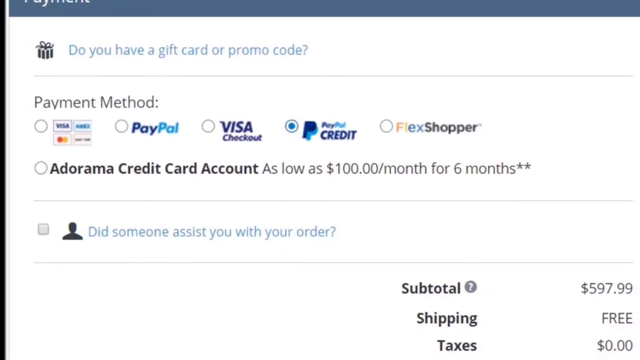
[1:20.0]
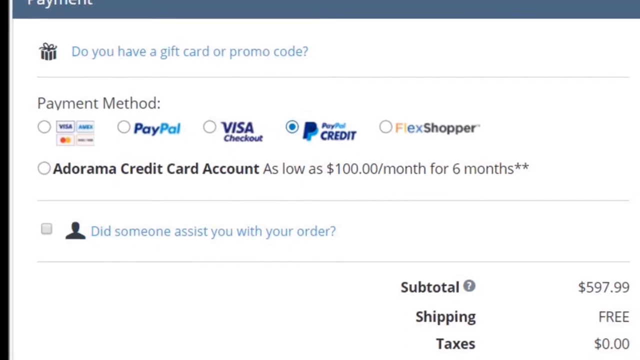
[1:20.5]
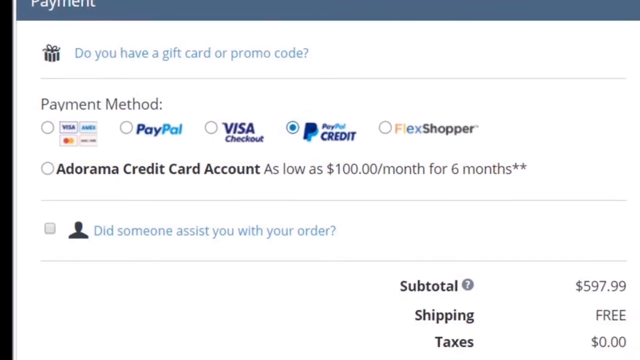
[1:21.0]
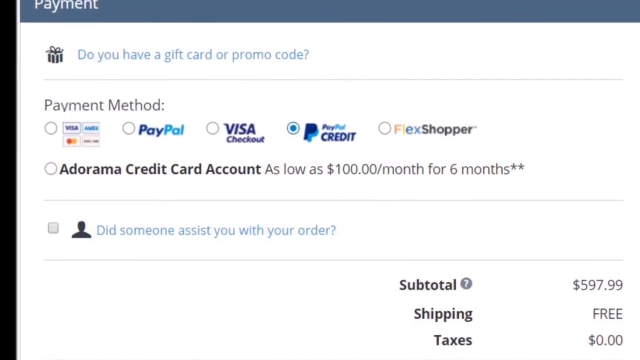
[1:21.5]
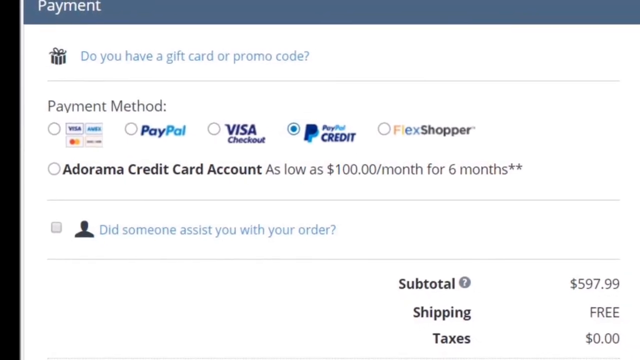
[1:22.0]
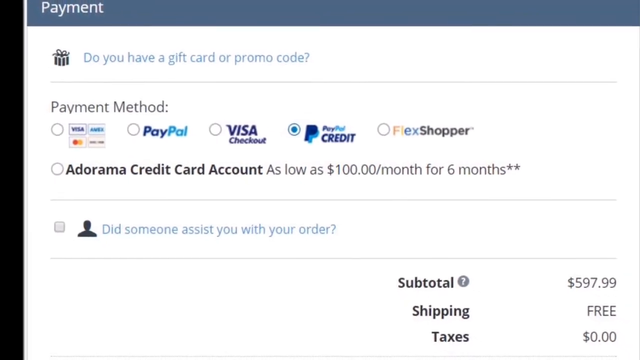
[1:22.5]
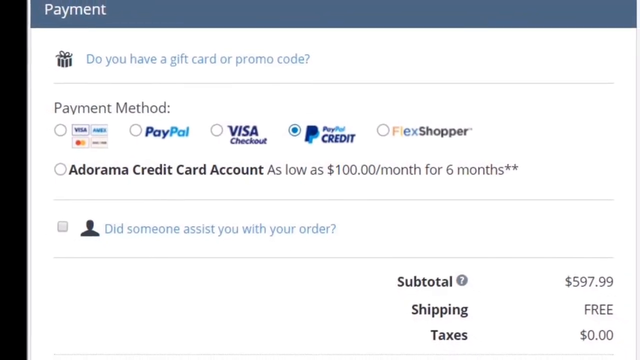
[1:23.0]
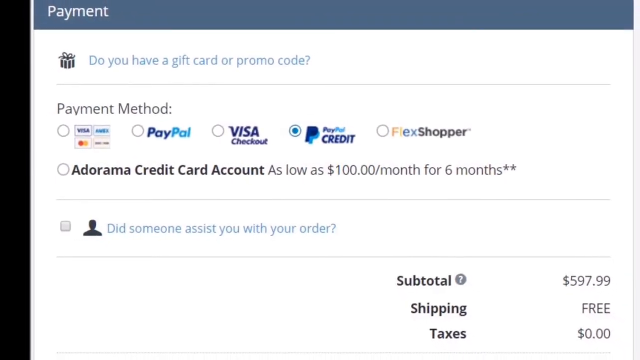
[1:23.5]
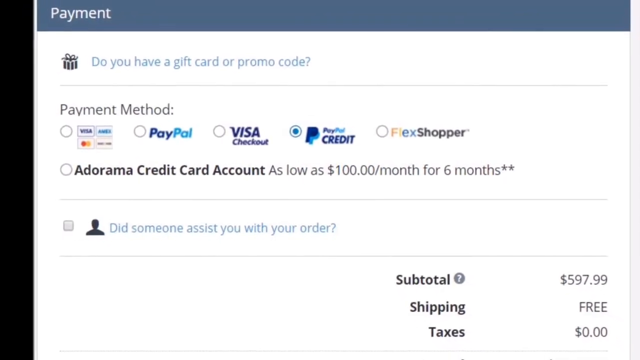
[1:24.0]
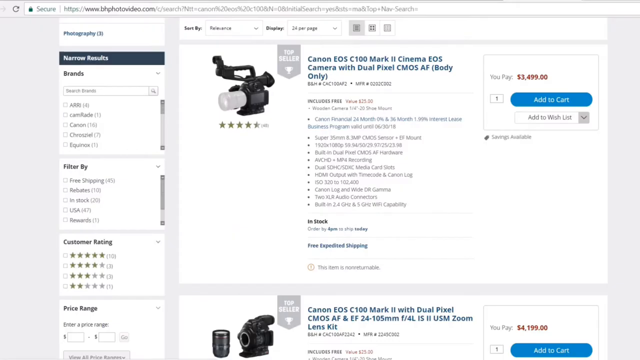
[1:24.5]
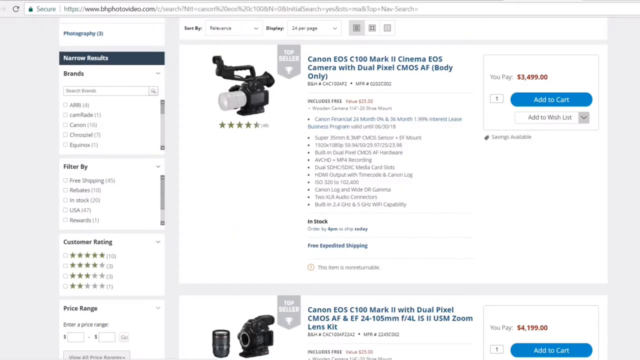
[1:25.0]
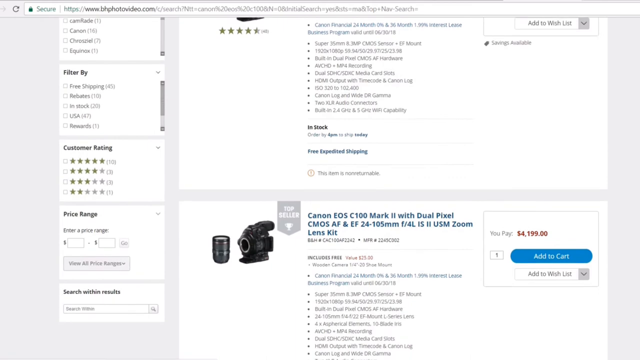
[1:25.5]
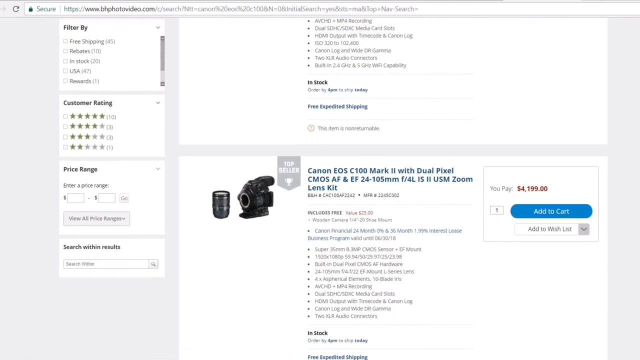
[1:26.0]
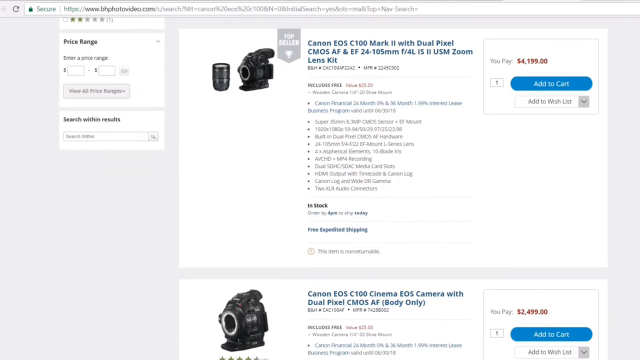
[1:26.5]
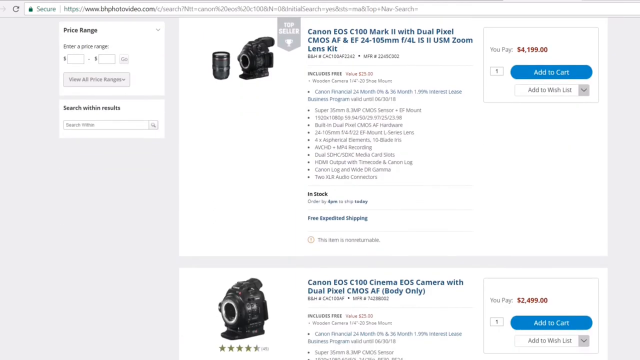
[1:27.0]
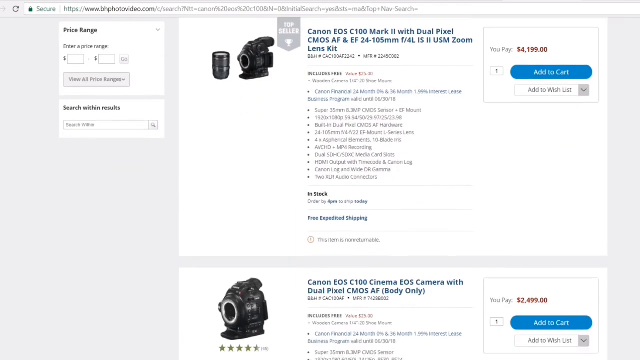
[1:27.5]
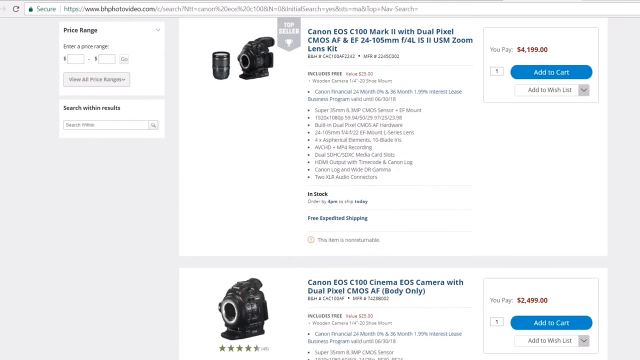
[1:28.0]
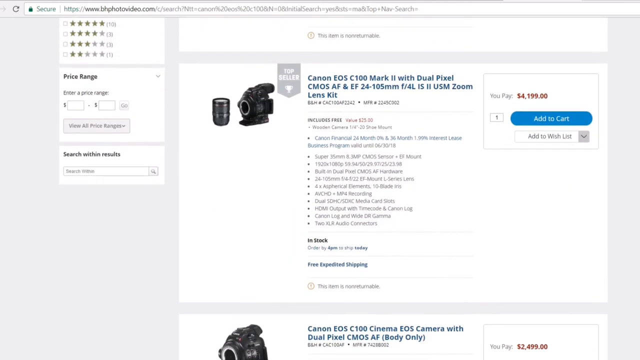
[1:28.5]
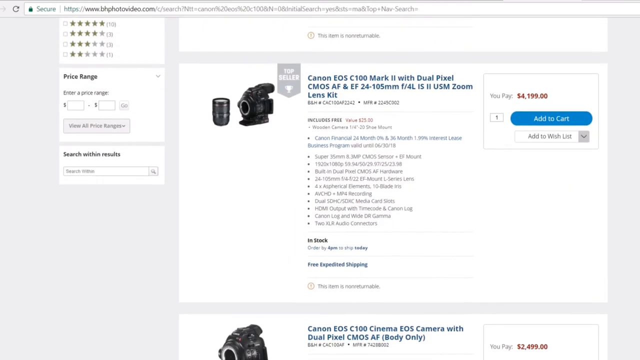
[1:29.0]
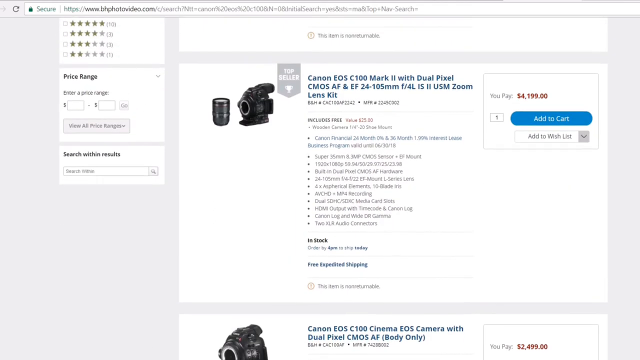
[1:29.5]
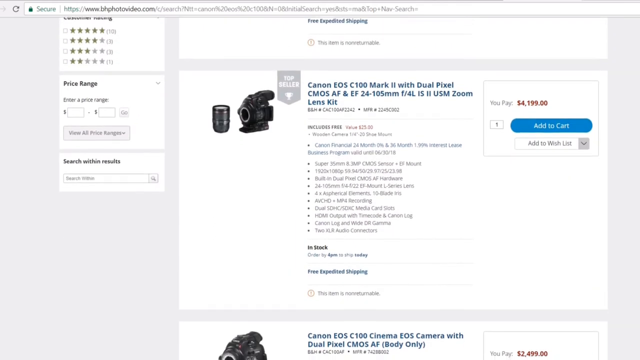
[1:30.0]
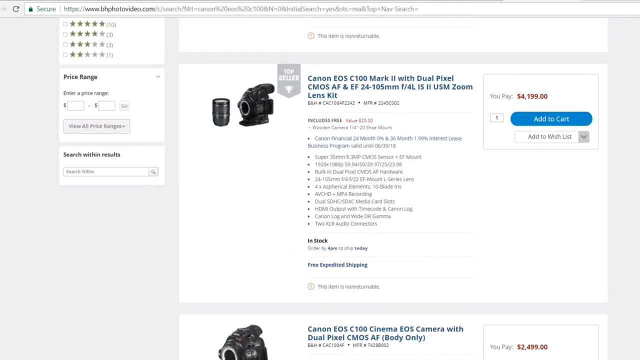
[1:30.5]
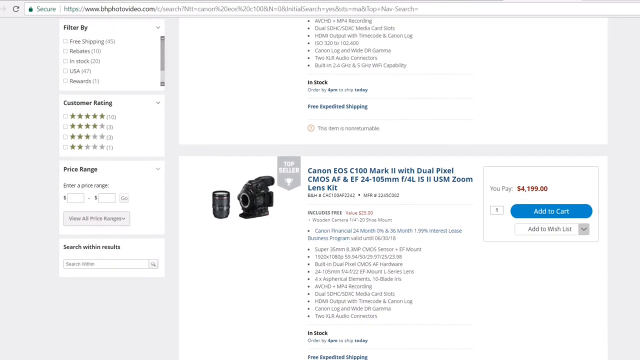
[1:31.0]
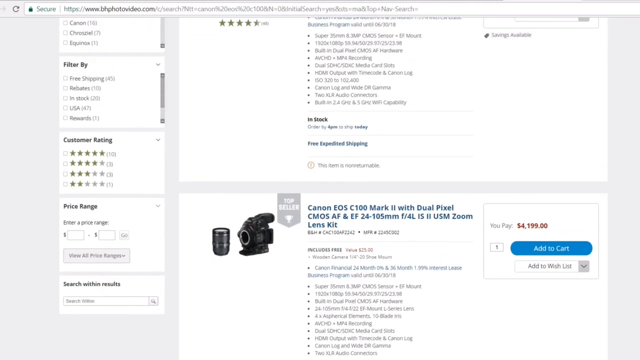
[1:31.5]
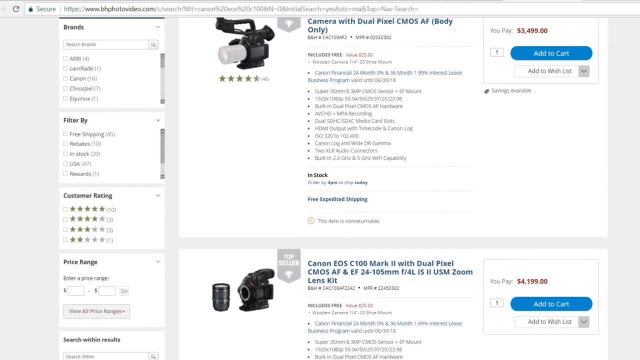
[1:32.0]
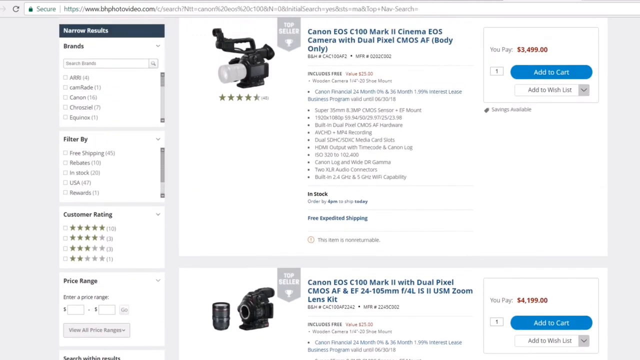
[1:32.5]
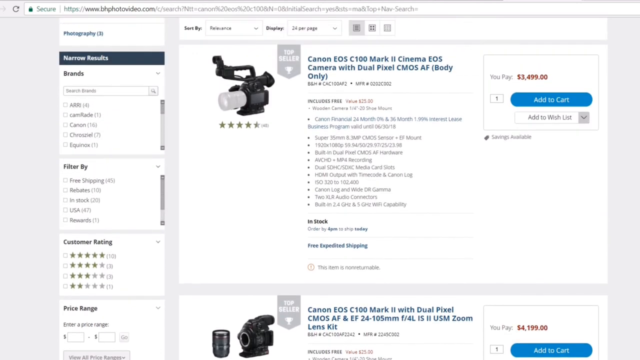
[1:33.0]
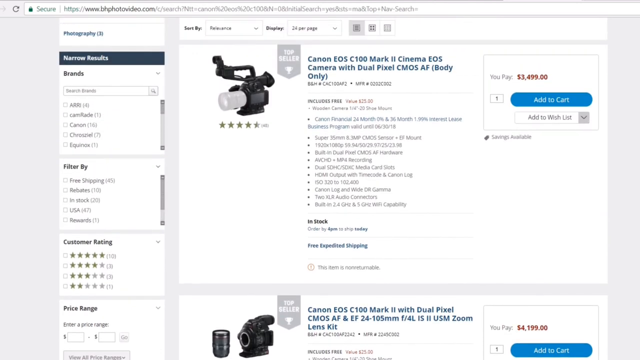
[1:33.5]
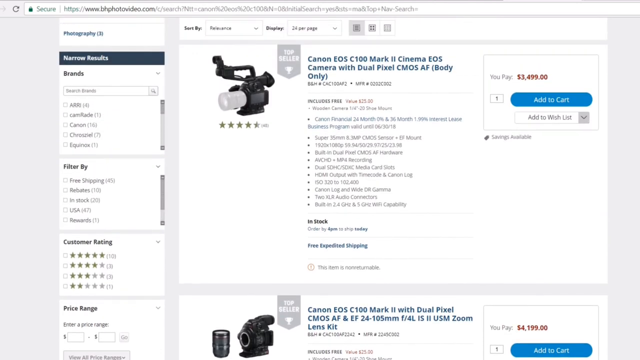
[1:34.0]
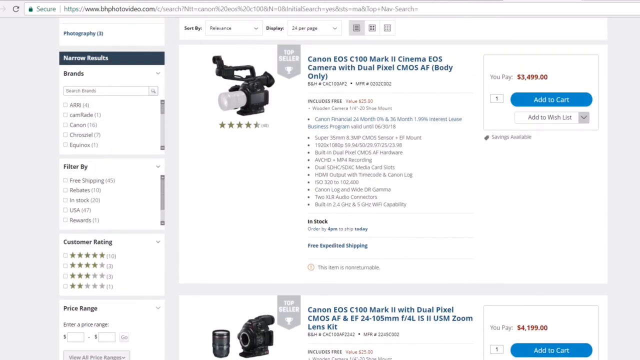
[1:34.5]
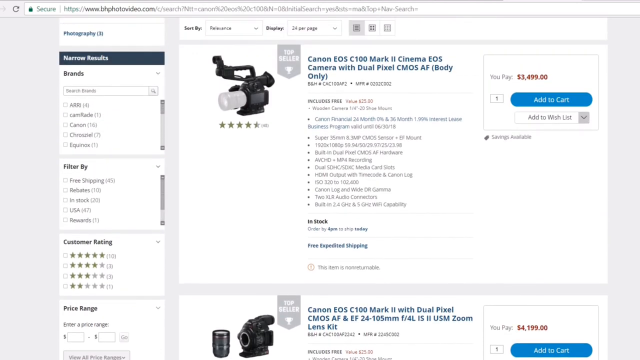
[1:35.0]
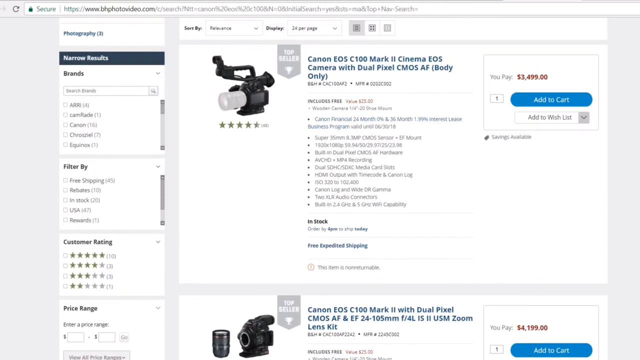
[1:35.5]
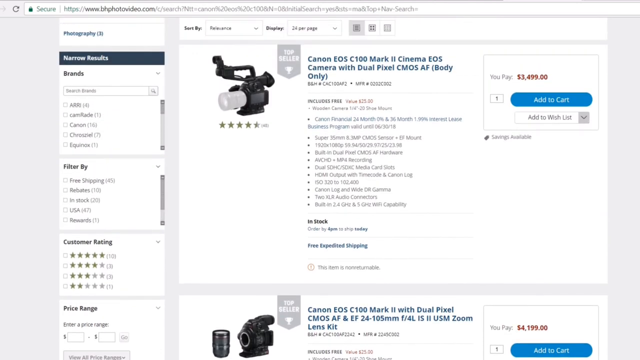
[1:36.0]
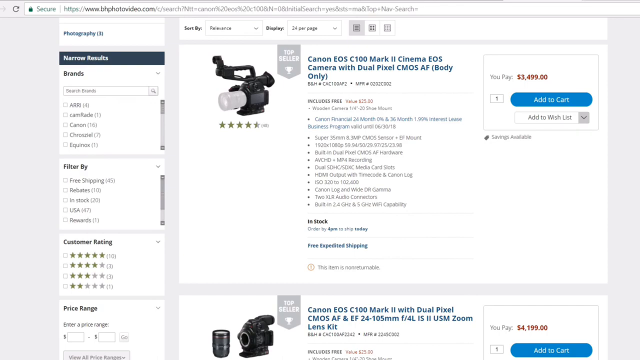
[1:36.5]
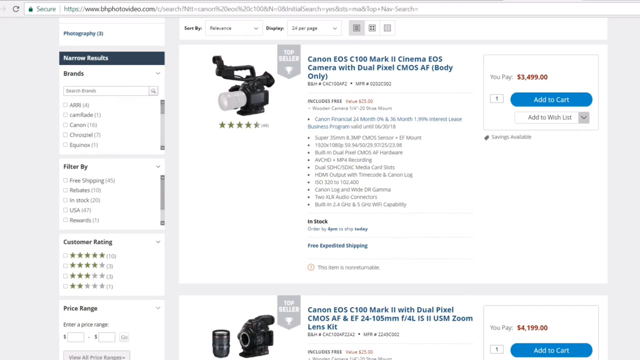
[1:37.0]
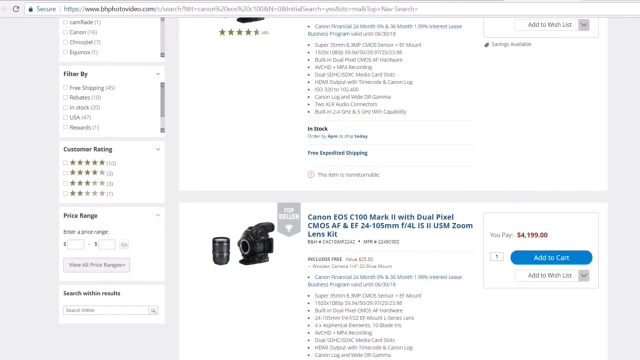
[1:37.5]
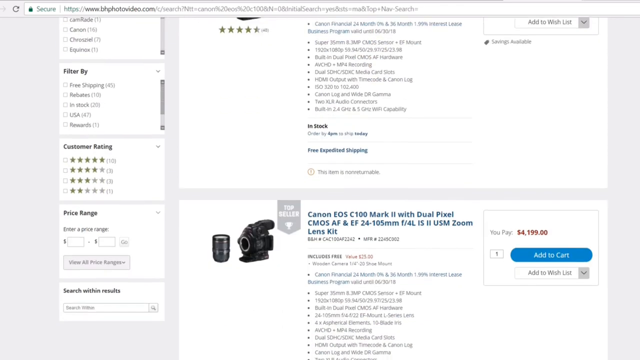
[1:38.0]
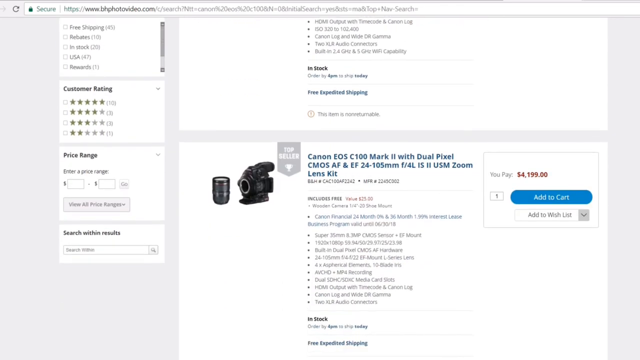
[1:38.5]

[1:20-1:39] The recording begins with the online cart and the flexible payment options, then scrolls through a website page with more products. Prices on this page are in the thousands, more expensive than the previous page, where items cost hundreds. The page features professional grade cameras of different grades and qualities.